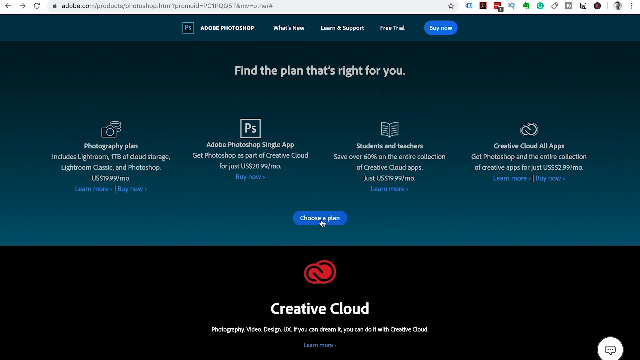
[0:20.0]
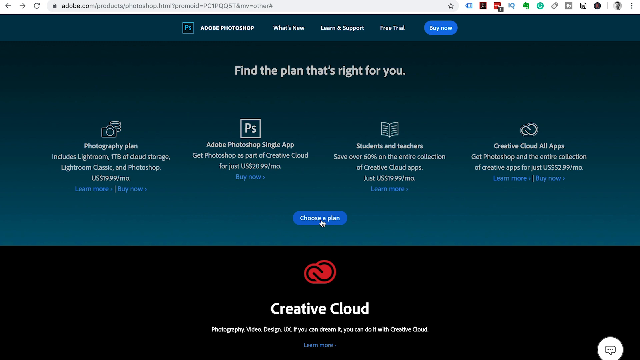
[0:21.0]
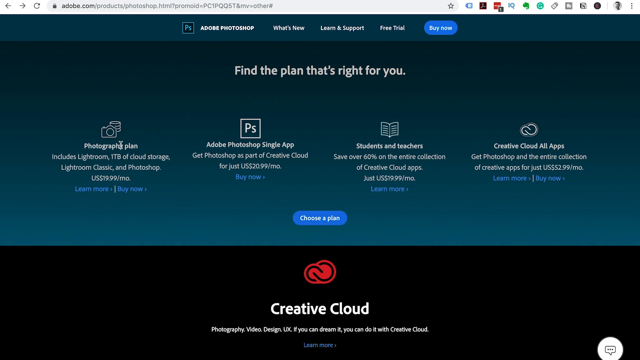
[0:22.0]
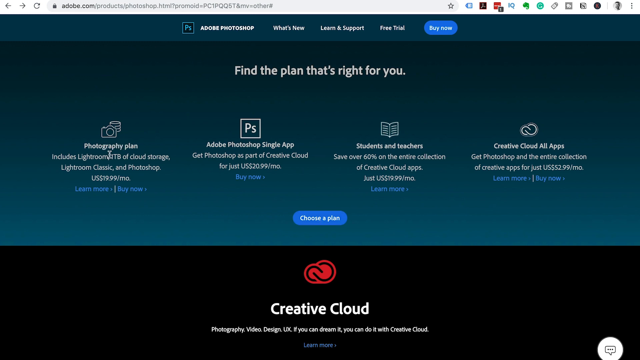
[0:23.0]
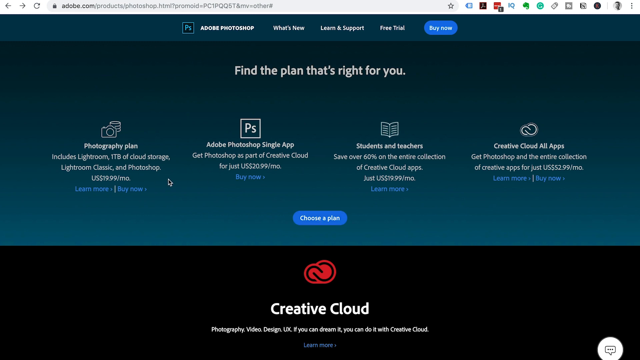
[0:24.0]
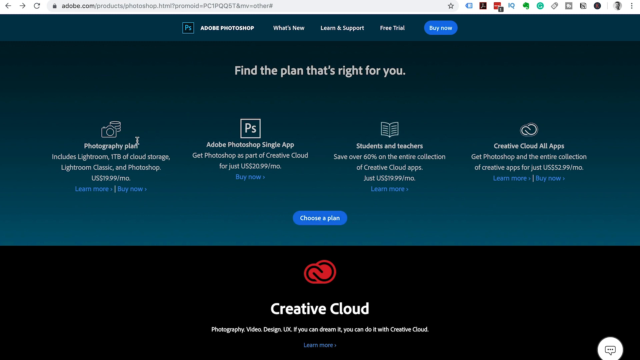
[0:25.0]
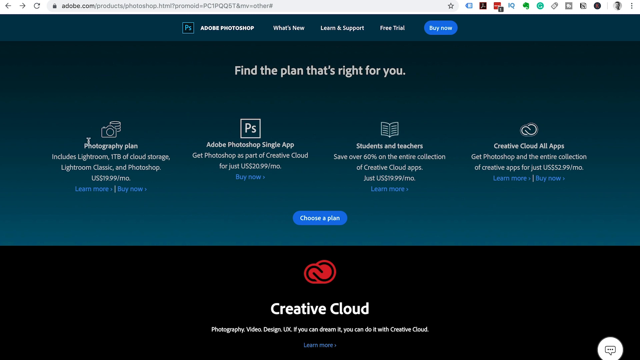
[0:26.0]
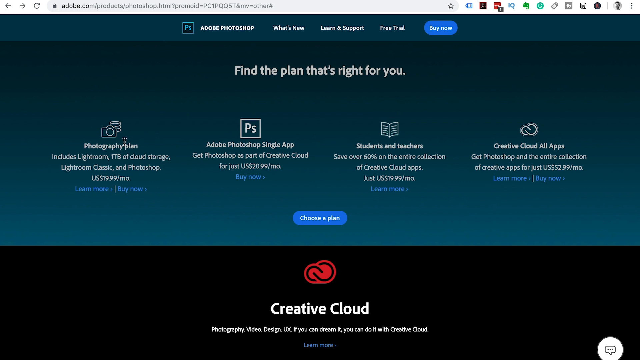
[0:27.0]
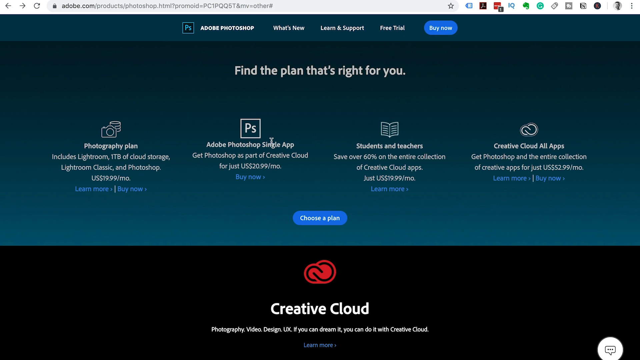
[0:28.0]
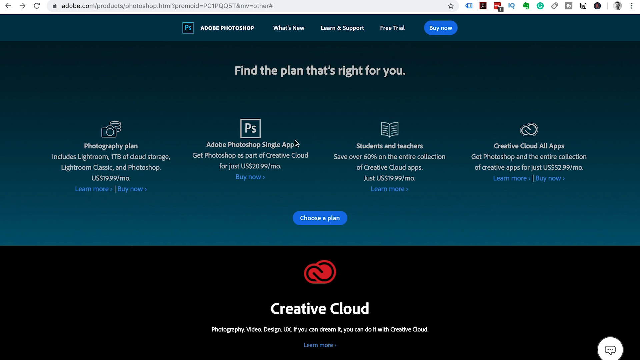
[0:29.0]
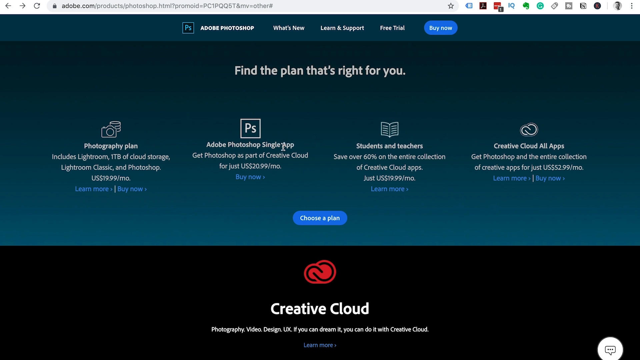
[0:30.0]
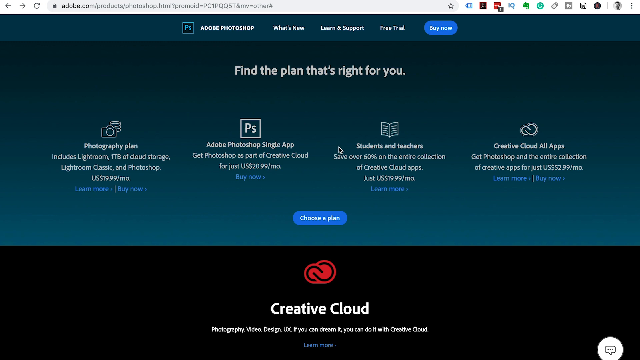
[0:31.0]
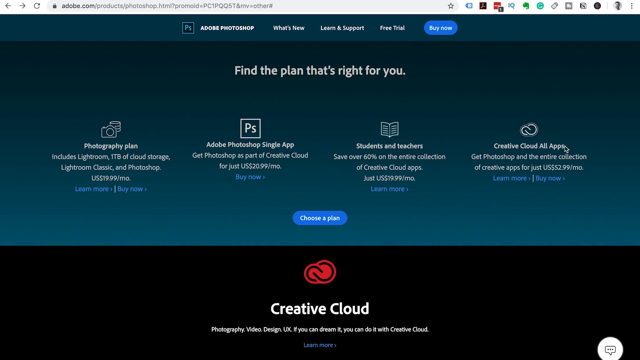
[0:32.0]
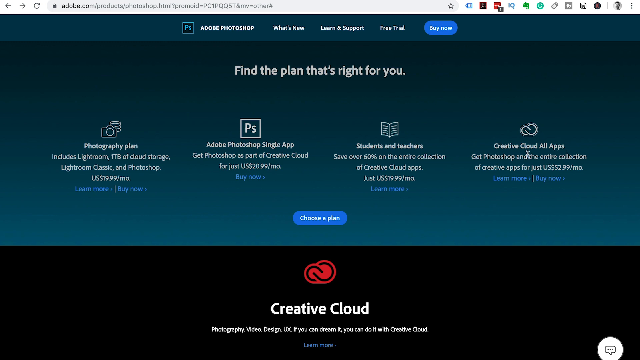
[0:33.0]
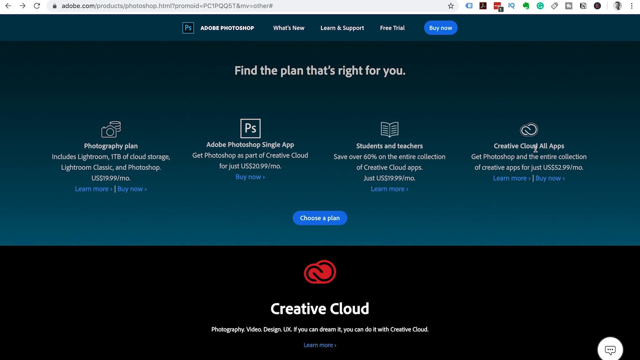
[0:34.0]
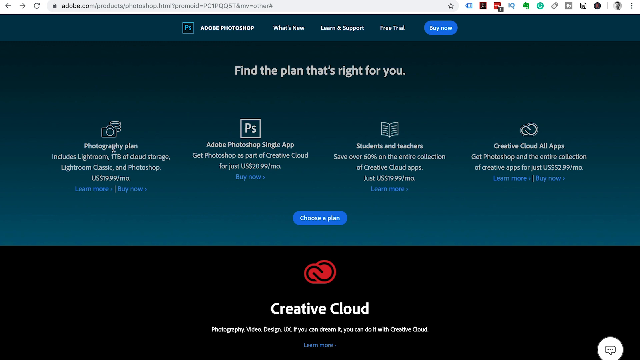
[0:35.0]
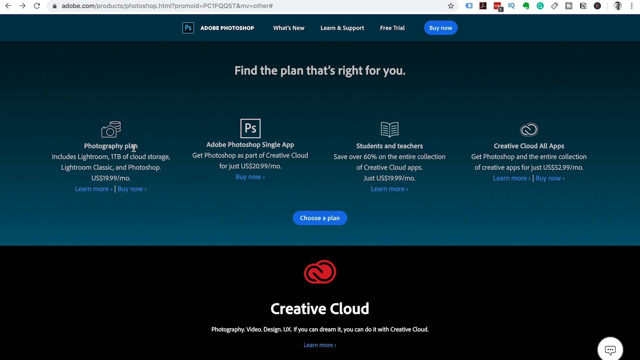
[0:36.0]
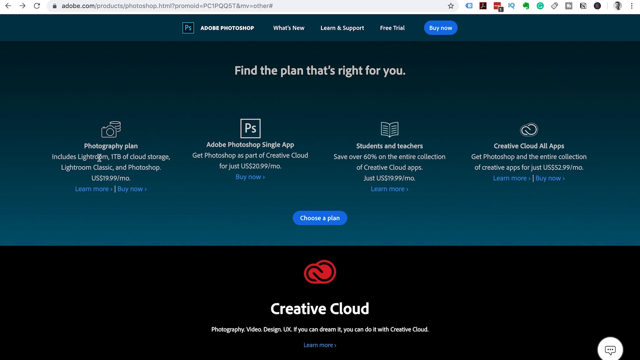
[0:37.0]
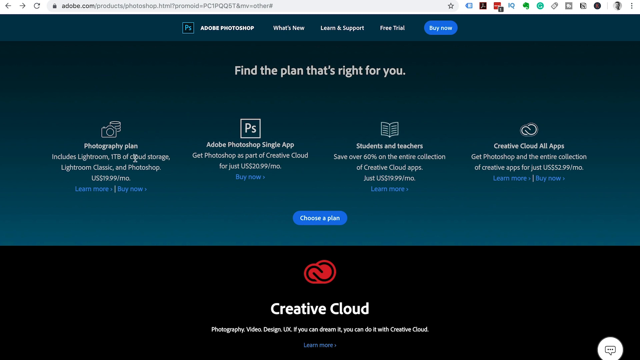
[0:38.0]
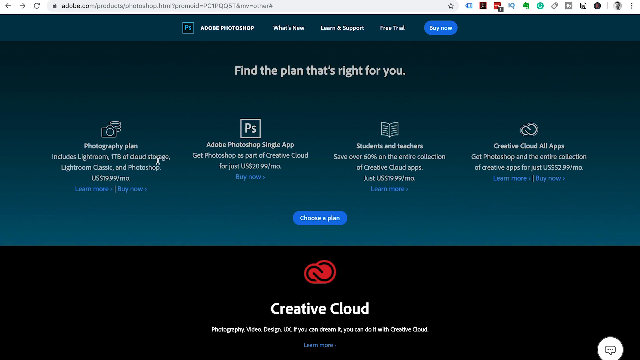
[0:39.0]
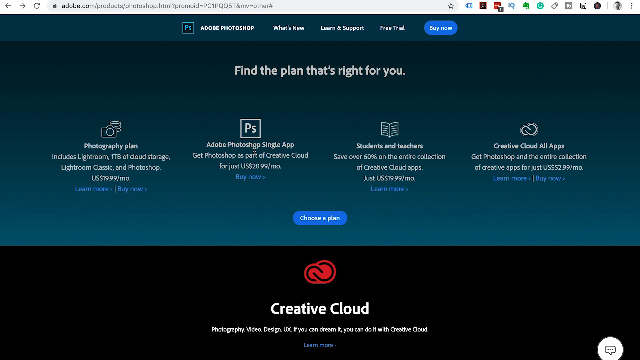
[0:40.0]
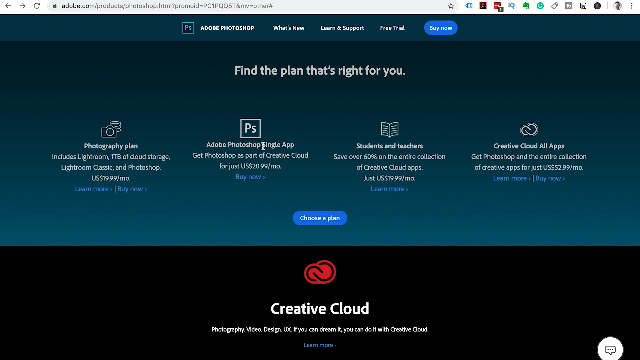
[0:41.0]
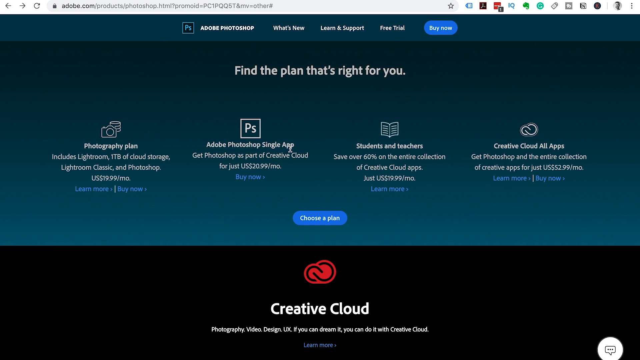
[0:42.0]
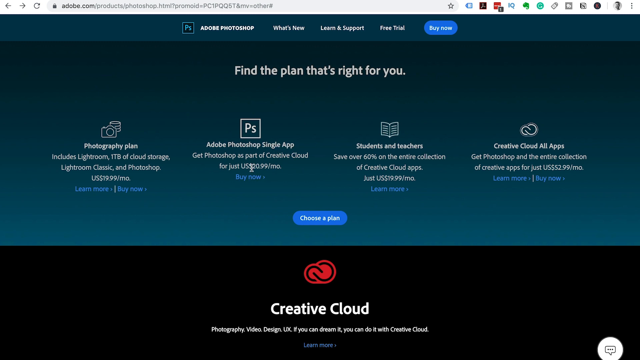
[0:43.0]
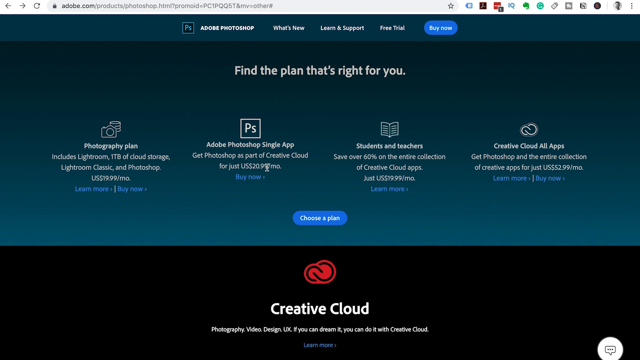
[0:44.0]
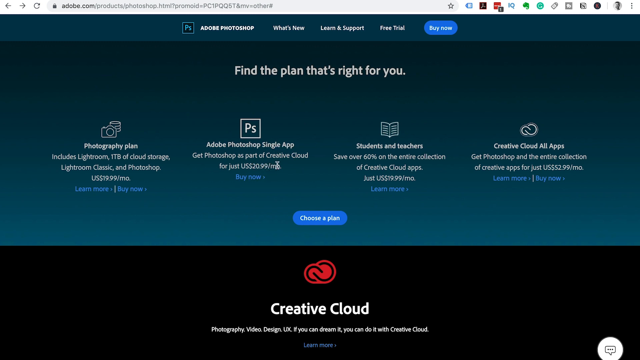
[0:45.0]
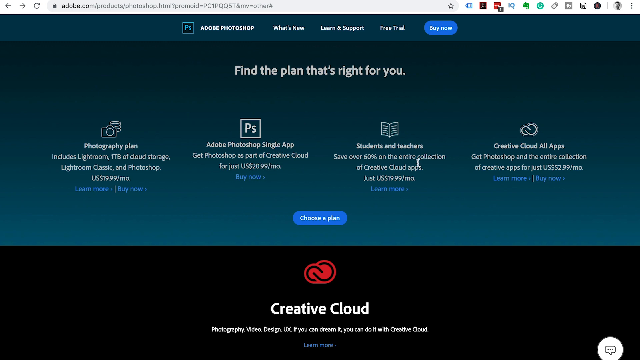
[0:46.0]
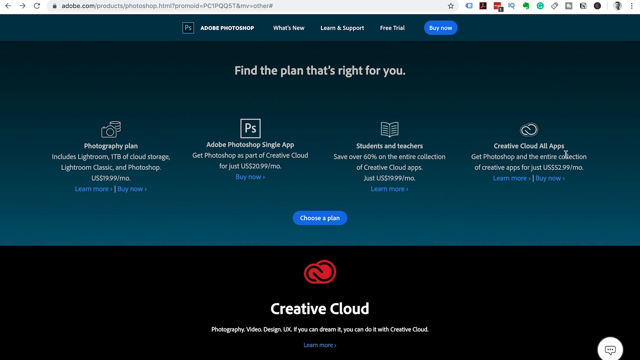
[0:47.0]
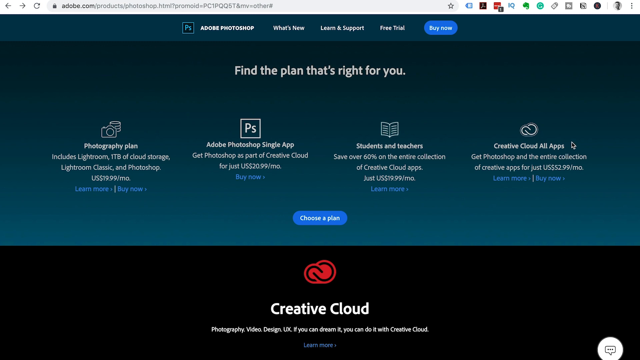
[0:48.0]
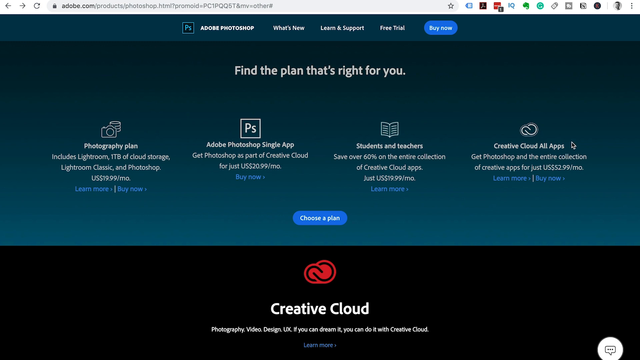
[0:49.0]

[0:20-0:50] More text is visible at the bottom in a large font, standing out starkly against a black background: "creative cloud." Above it is a red, sort of pairing of clouds with black lines through them. At the top center it says "find the plan that's right for you." There appear to be four different plans. The one on the left has a camera at the top and says "photography plan," which includes Lightroom, 1 TB of cloud storage, Lightroom Classic and Photoshop for US $19.99 a month. Next is "Adobe Photoshop single app," reading "get Photoshop as part of creative cloud for just $20.99 a month," with a blue "buy now" link below. To the right of that, with sort of a book icon at the top, is "students and teachers," reading "save over 60% on the entire collection of creative cloud apps just US $19.99 a month," with a blue "learn more" link below. The last option, on the right, is "creative cloud all apps," reading "get Photoshop and the entire collection of all creative apps for just US $52.99 a month."